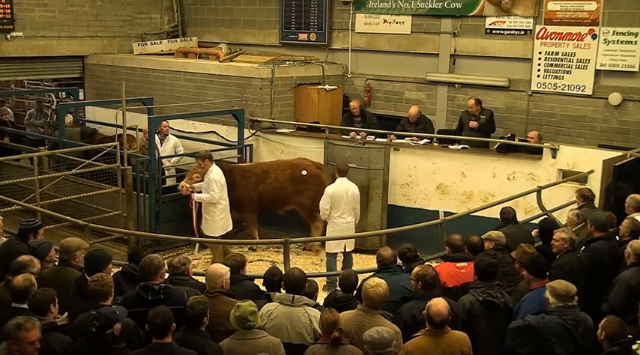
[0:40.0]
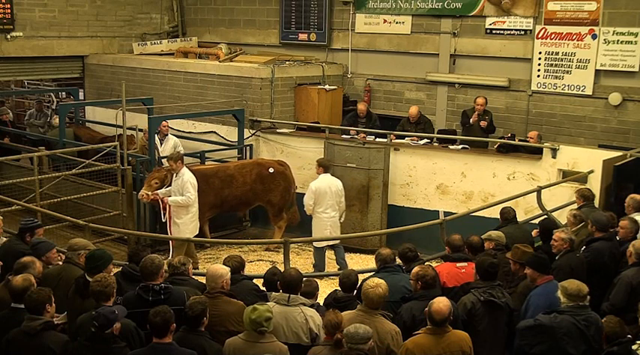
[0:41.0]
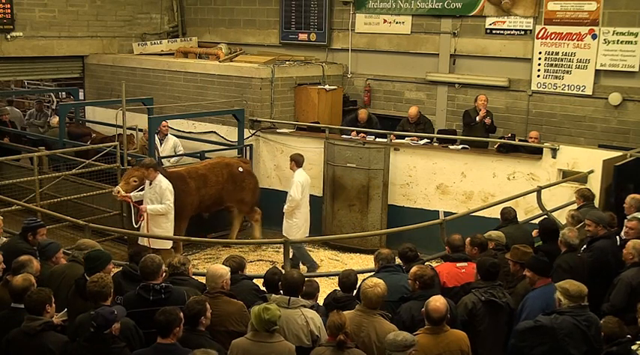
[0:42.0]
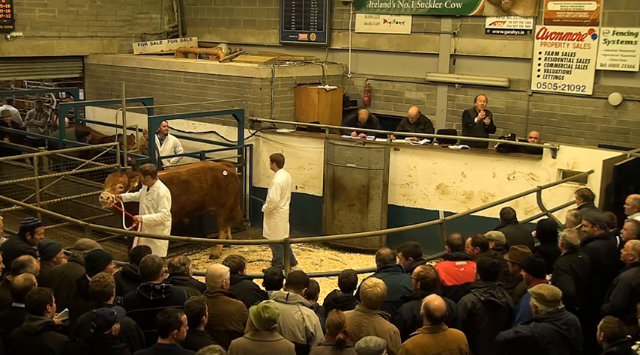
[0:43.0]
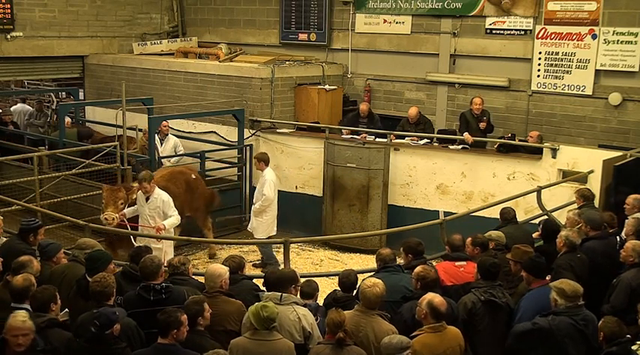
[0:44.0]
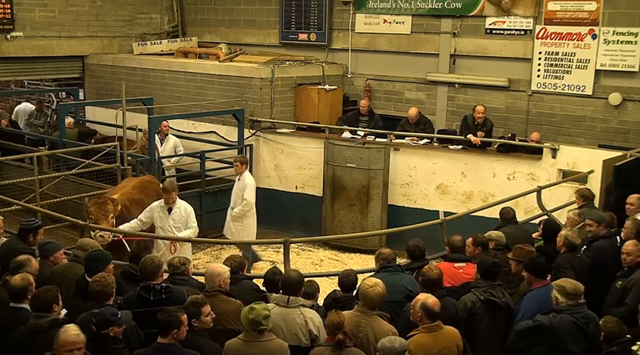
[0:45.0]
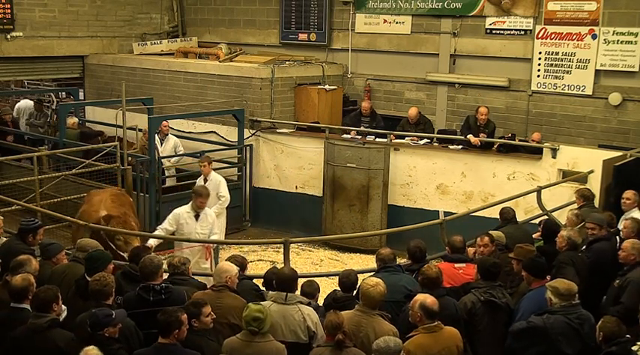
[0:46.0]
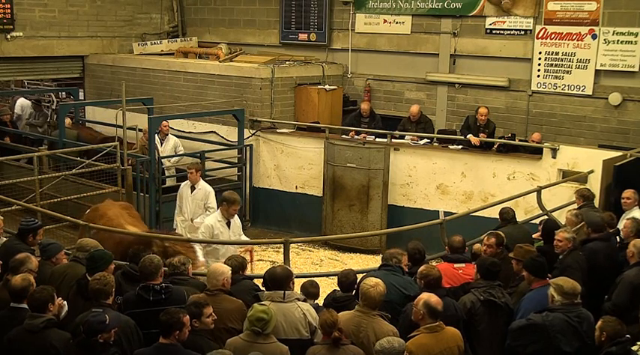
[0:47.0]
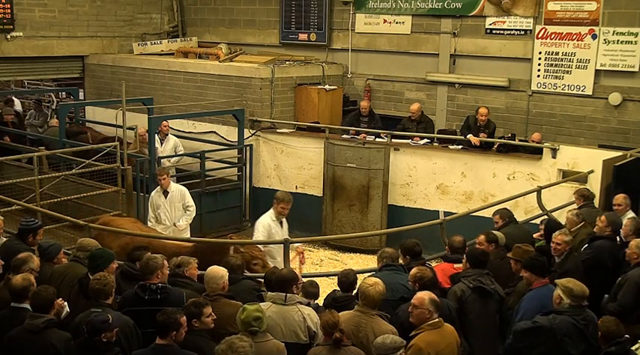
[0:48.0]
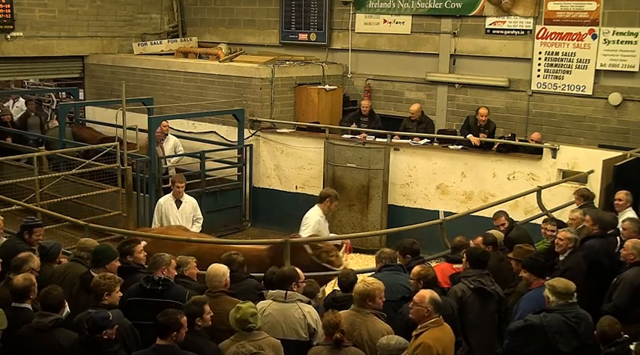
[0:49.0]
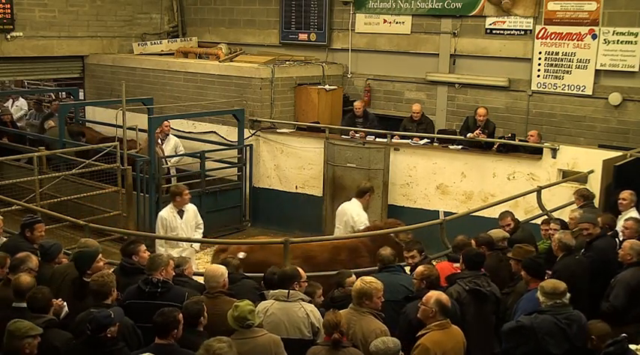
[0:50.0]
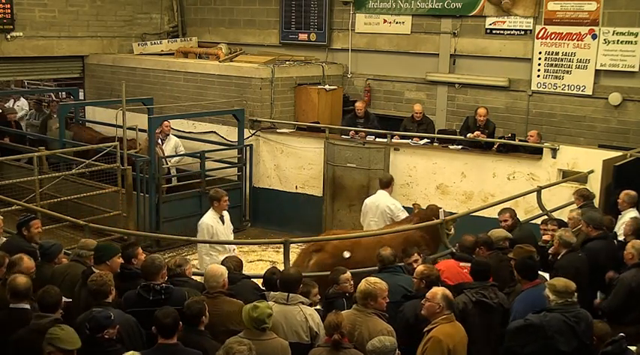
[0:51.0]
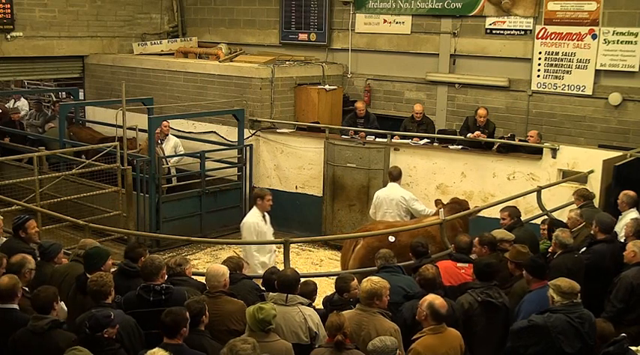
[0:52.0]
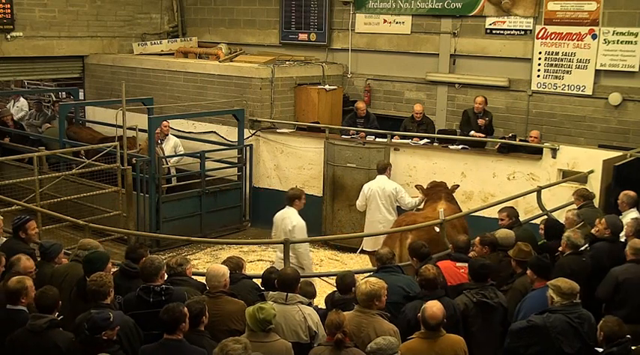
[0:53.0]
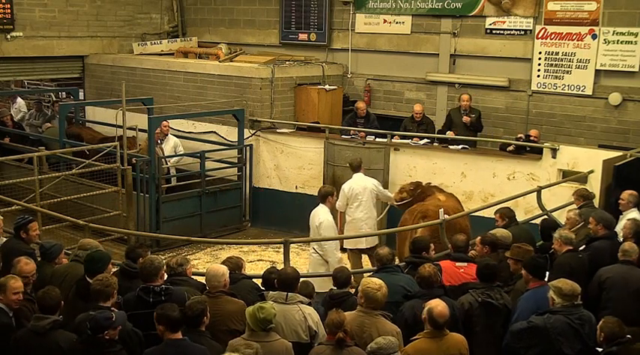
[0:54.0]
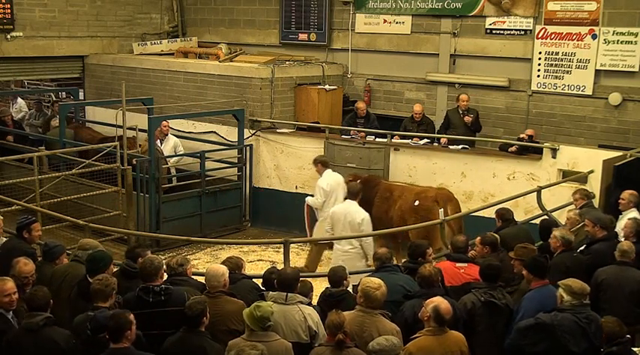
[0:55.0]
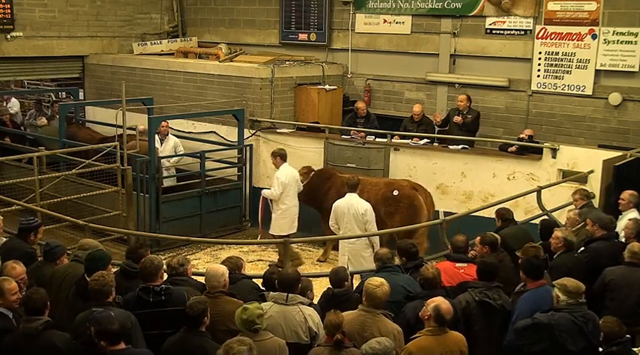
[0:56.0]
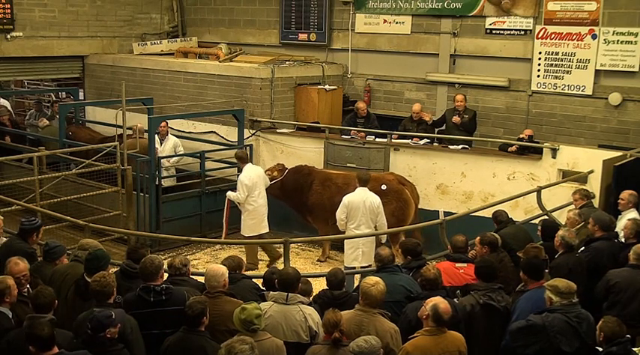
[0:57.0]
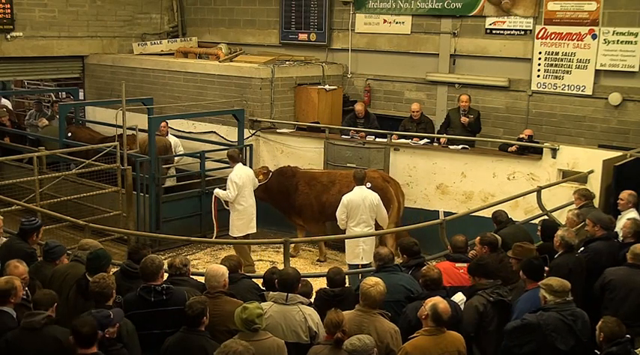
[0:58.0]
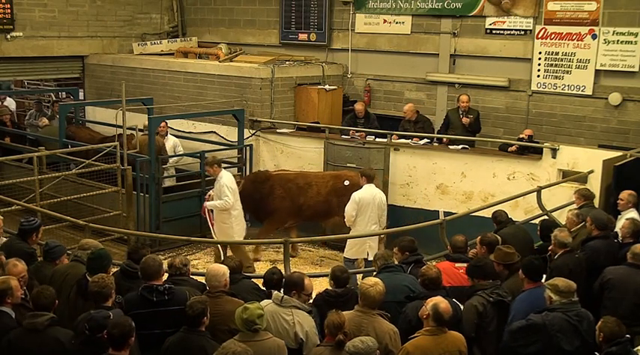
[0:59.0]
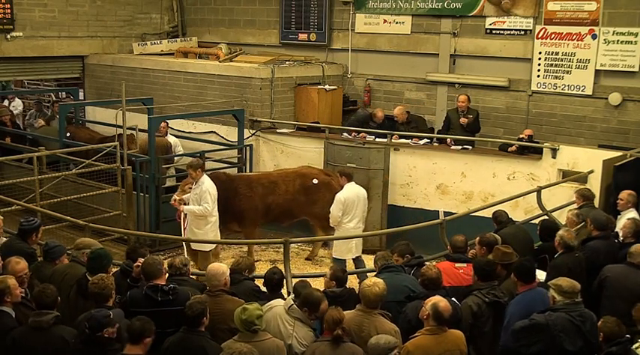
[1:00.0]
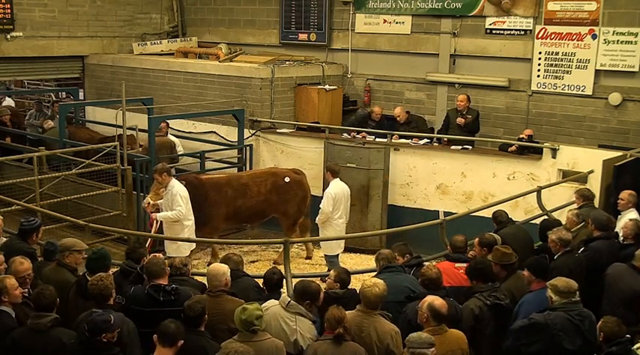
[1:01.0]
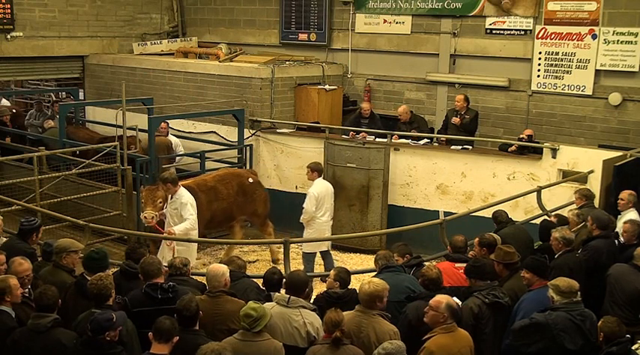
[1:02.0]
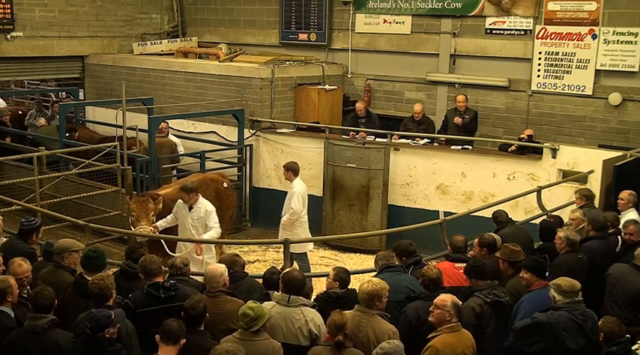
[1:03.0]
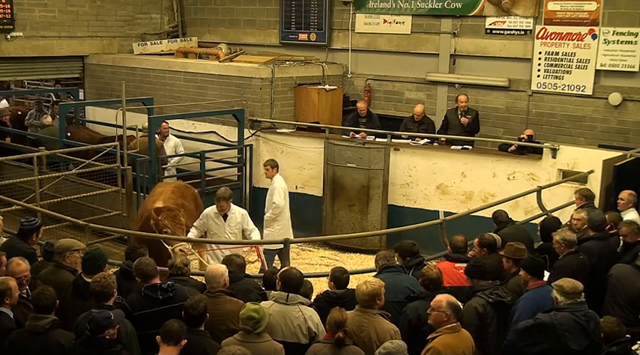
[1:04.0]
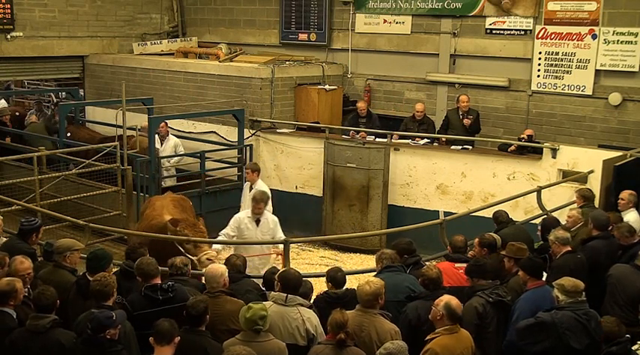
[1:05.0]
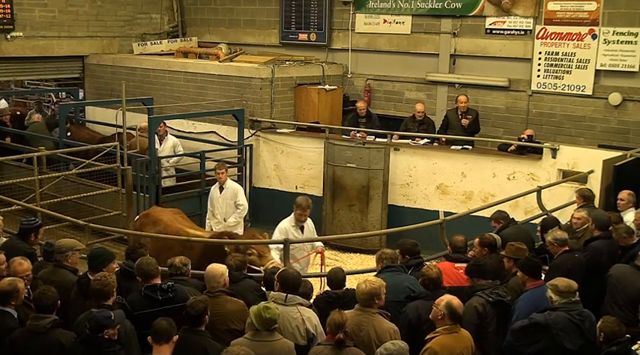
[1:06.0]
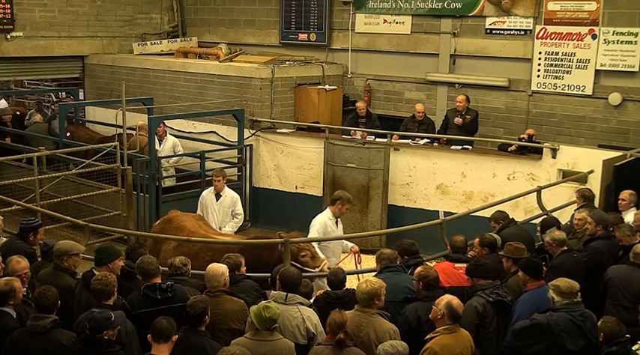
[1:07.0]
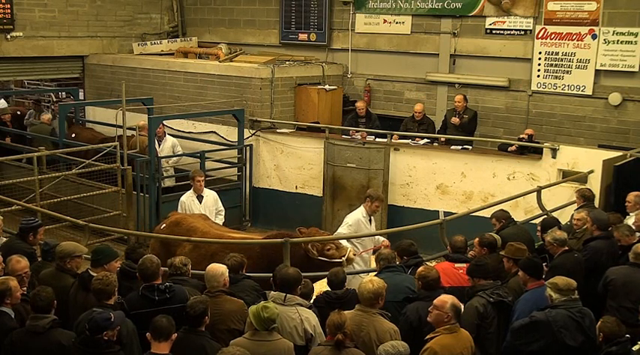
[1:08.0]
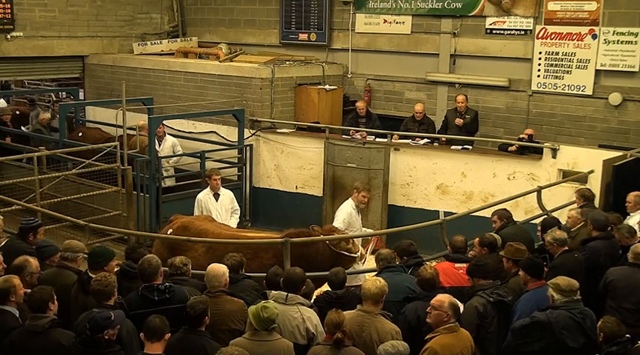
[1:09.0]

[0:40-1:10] A crowd of people watches two men in white coats lead a cow in circles around a little paddock area. Someone stands above them on a small raised area, talking into a microphone, possibly describing the cow or auctioning it off. It may be an auction, but nobody is seen raising their hands. From some of the angles as the cow turns, it appears to probably be male, so it is possibly a bull rather than a cow. The animal follows along complacently and does not seem to fight. It has two white circles jabbed into its back end.